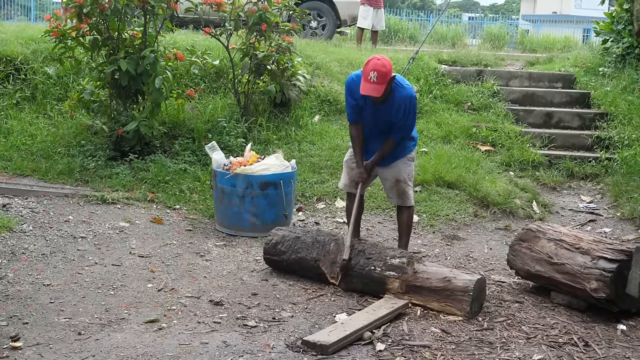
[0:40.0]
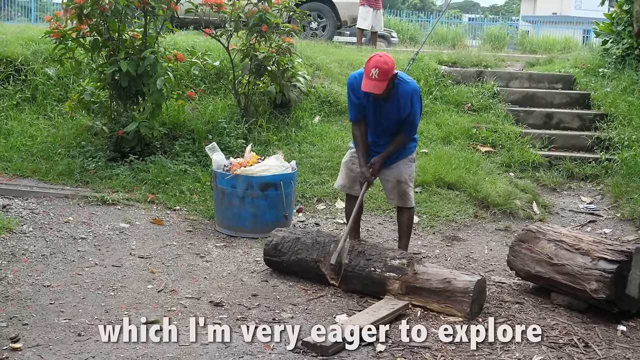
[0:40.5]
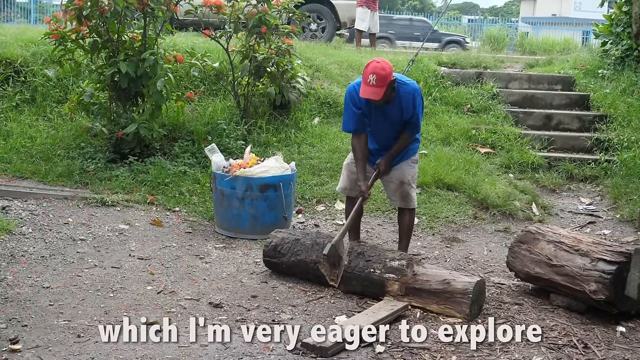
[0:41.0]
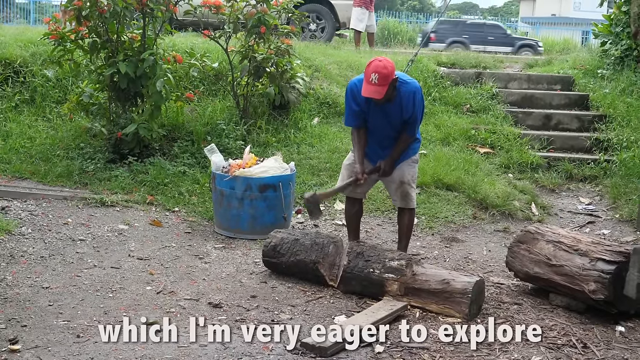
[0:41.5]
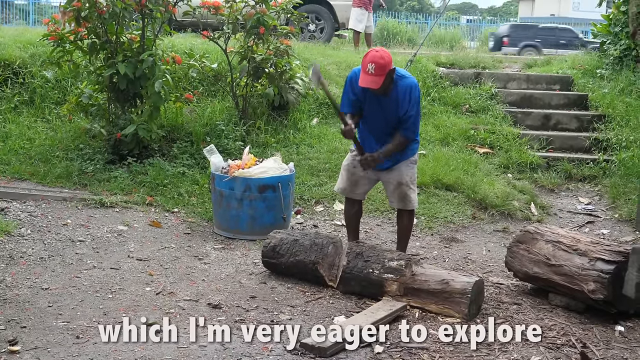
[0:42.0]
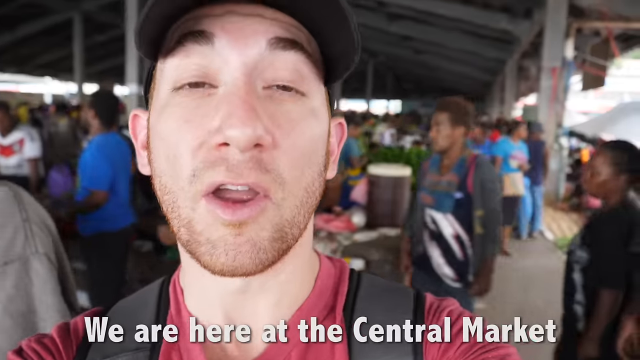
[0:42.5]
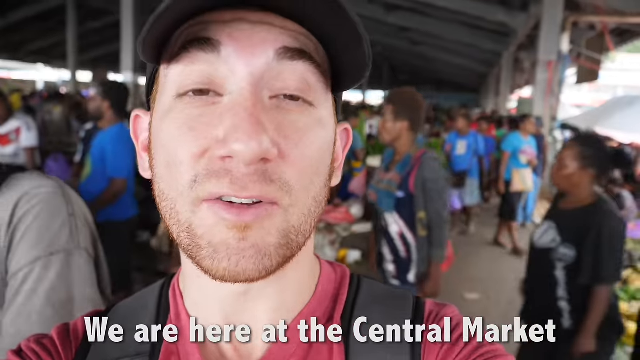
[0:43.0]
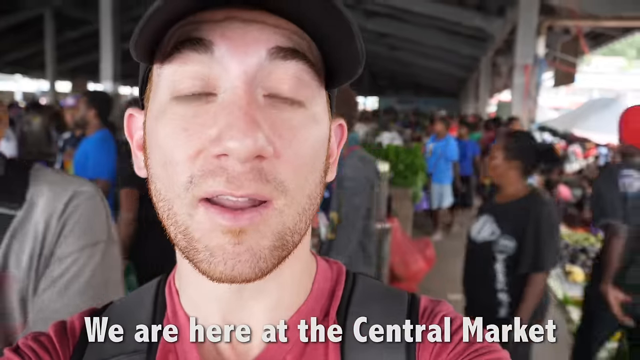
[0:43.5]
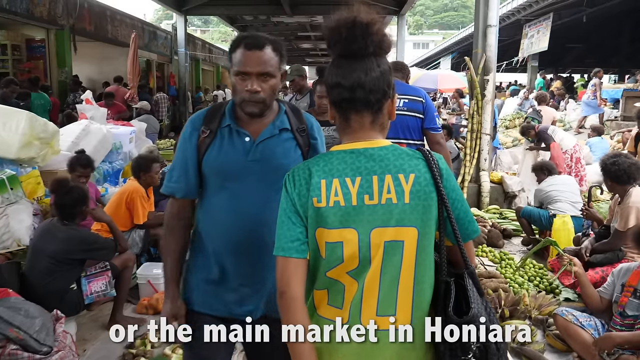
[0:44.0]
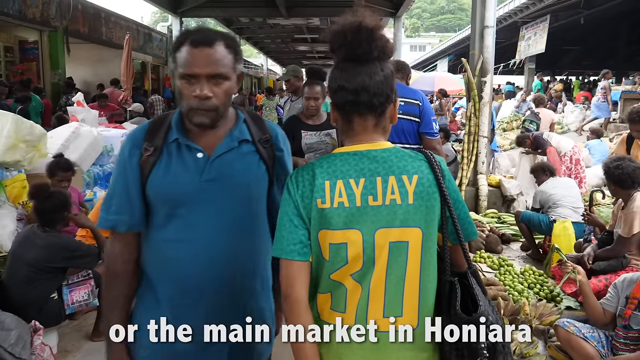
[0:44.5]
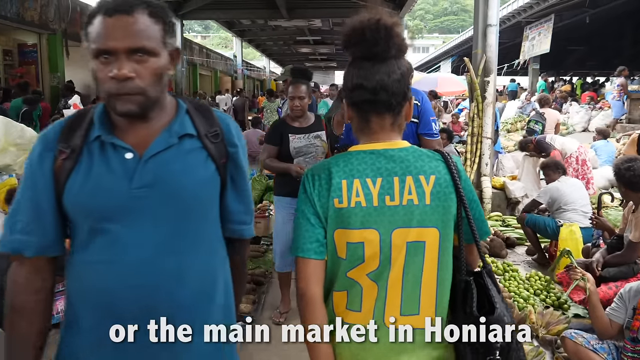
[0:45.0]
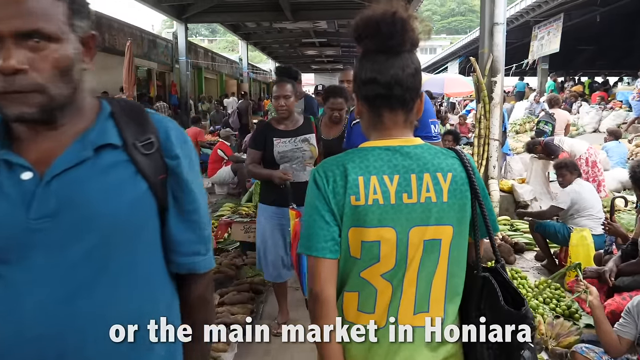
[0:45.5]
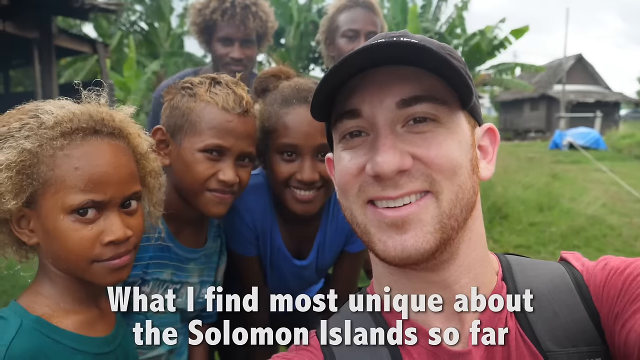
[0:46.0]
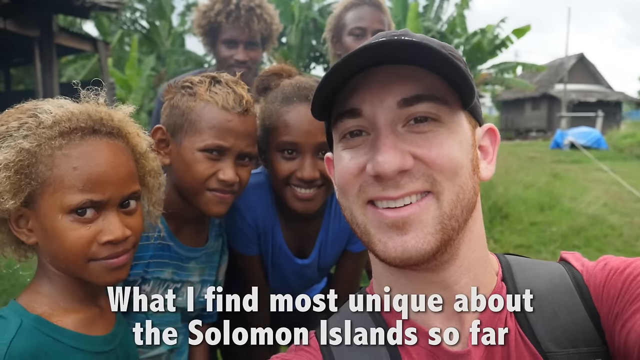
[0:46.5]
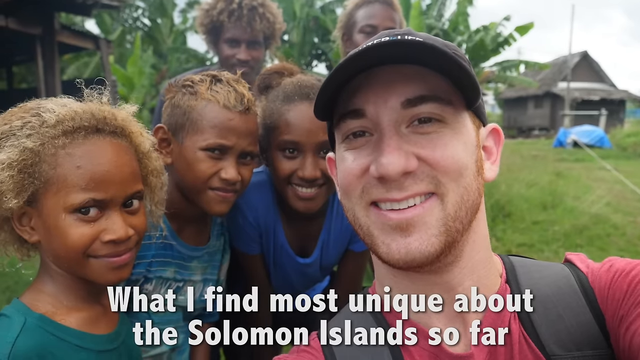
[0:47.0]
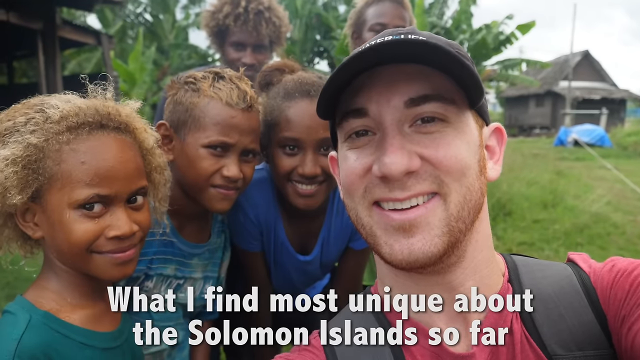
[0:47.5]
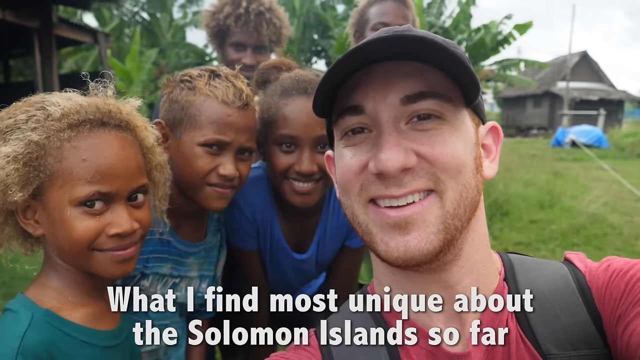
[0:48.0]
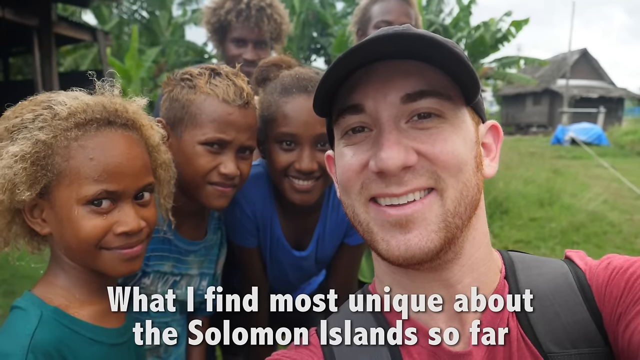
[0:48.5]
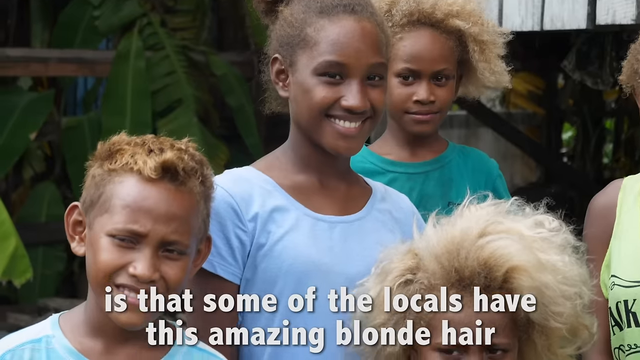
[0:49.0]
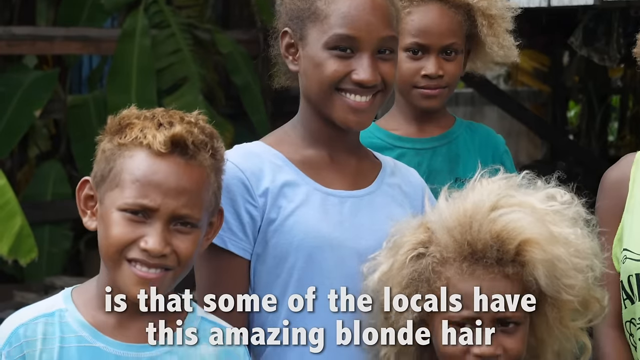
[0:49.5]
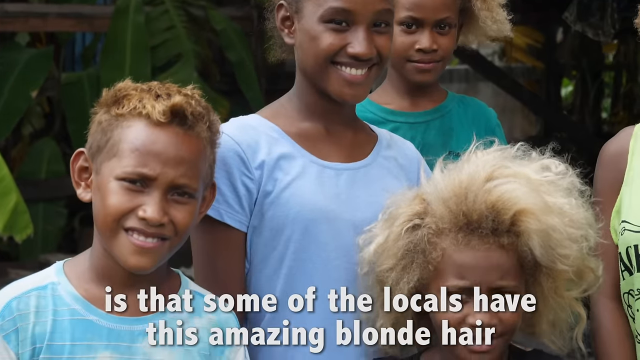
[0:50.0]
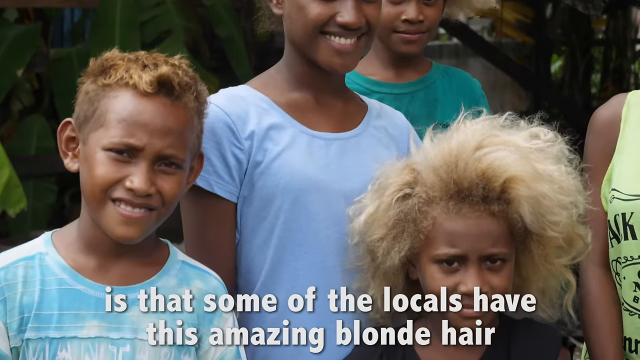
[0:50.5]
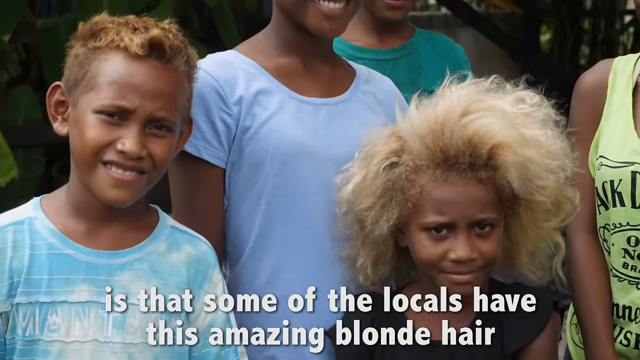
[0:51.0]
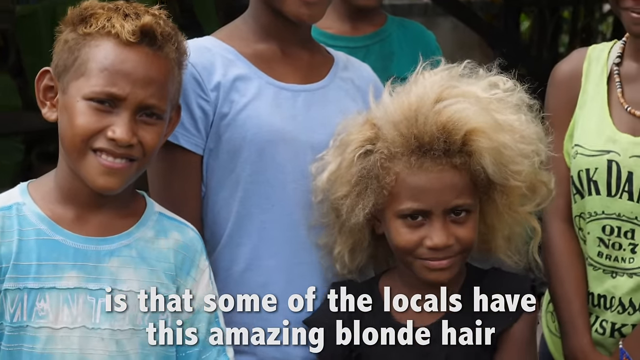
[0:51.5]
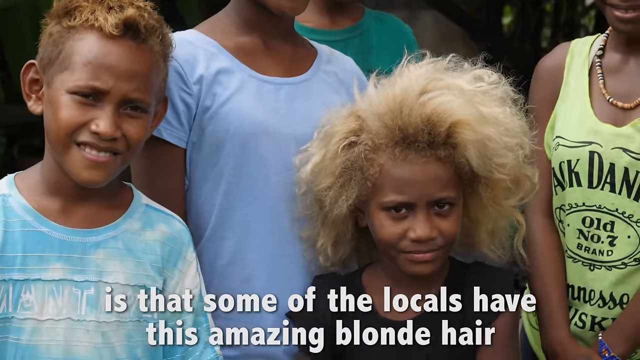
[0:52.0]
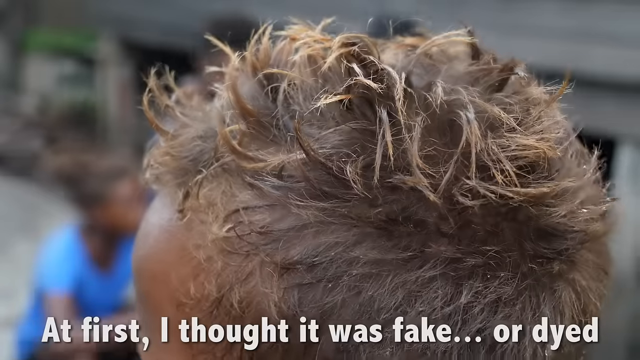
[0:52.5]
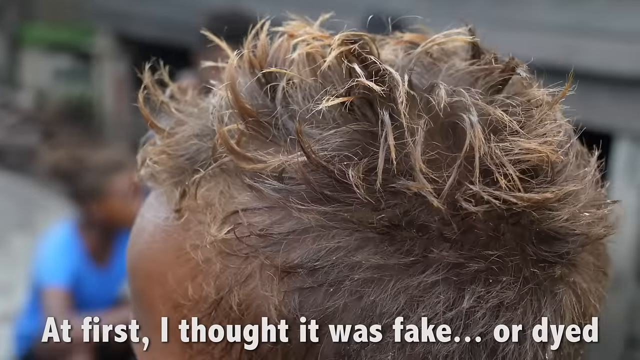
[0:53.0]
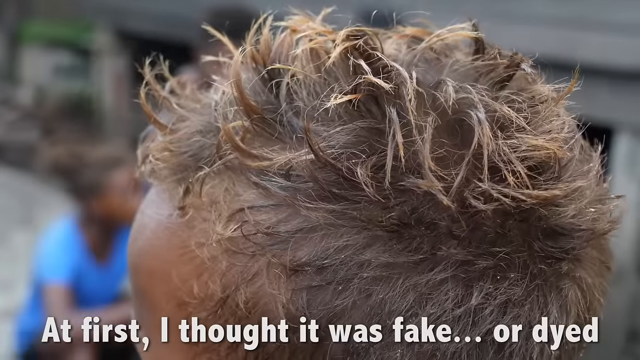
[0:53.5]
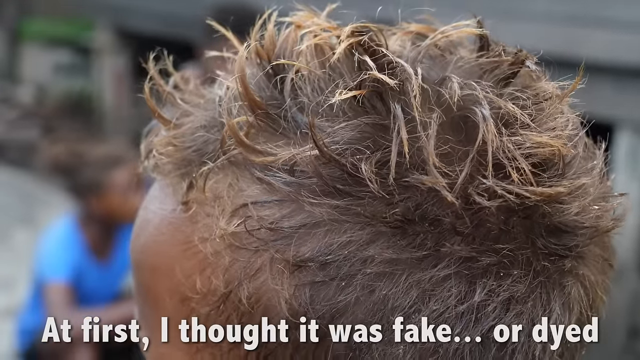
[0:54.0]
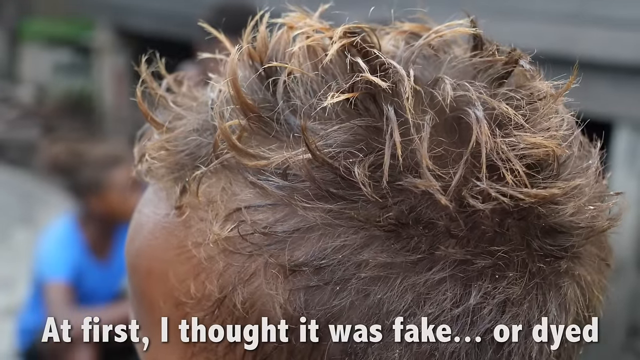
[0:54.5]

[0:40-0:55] The narrator is in a market in Honiara with fresh food. He takes pictures with the locals, and the color of their naturally blonde hair is probably what astounds him most.